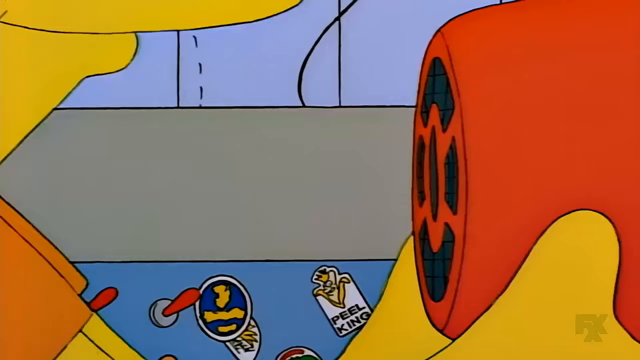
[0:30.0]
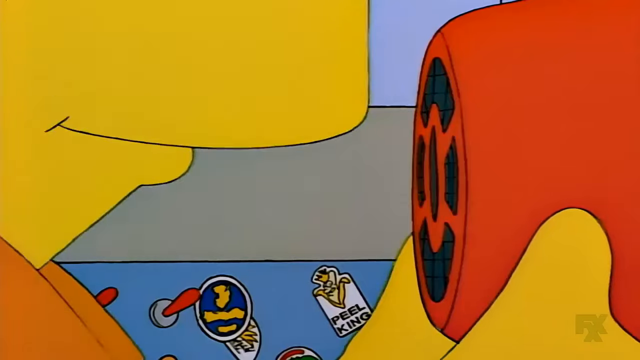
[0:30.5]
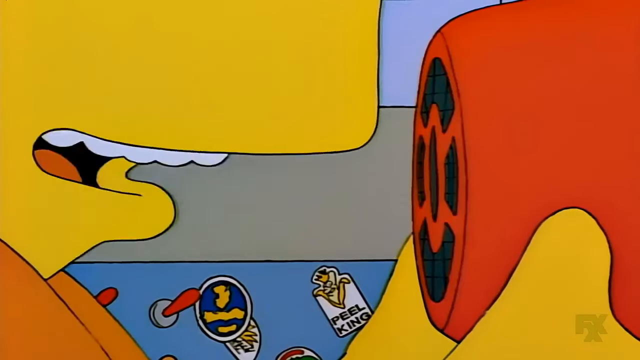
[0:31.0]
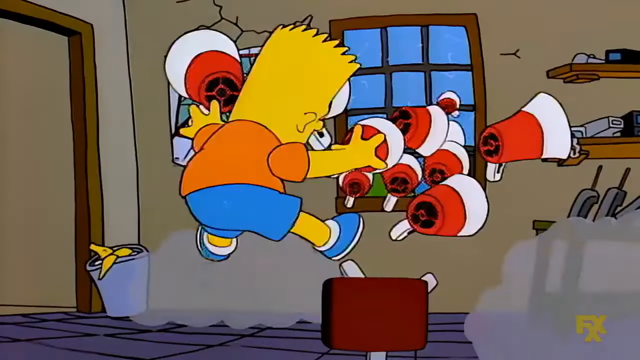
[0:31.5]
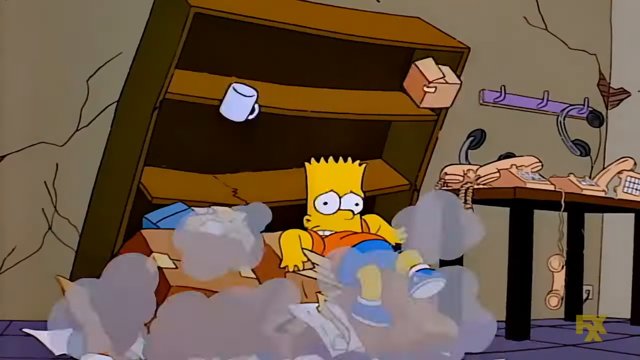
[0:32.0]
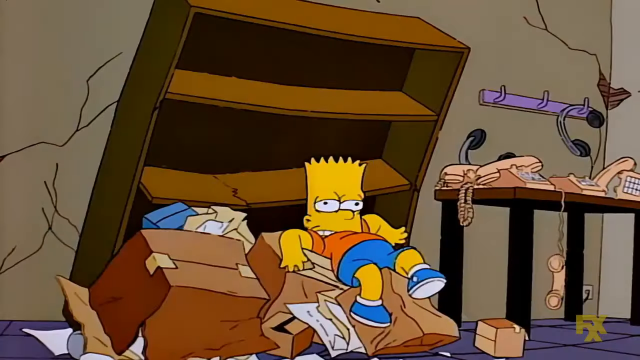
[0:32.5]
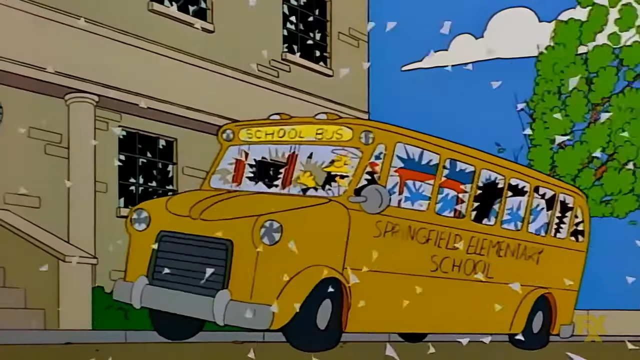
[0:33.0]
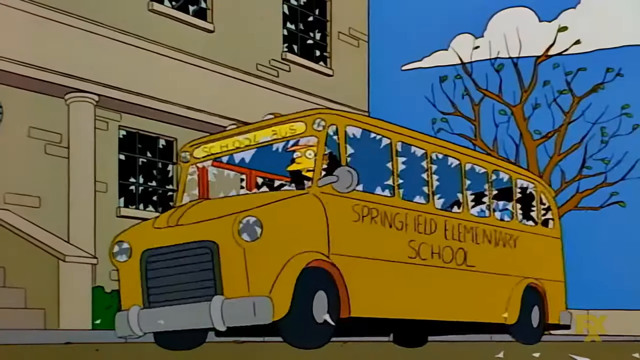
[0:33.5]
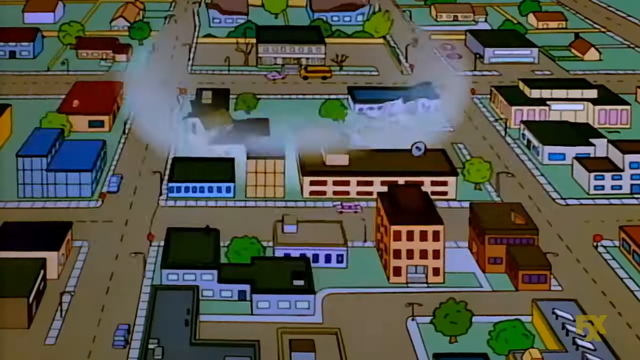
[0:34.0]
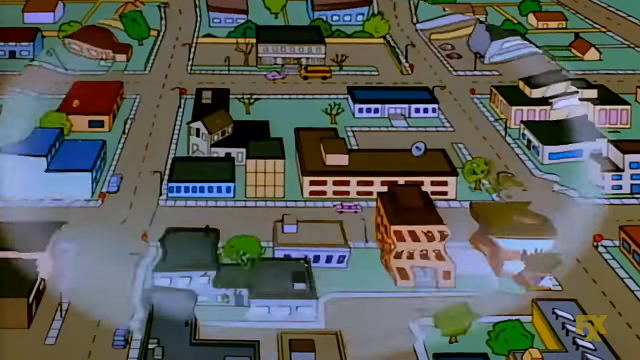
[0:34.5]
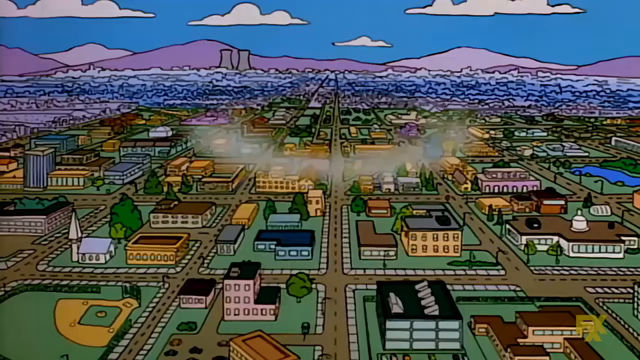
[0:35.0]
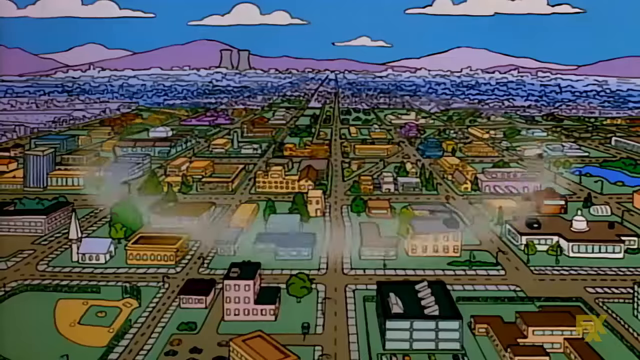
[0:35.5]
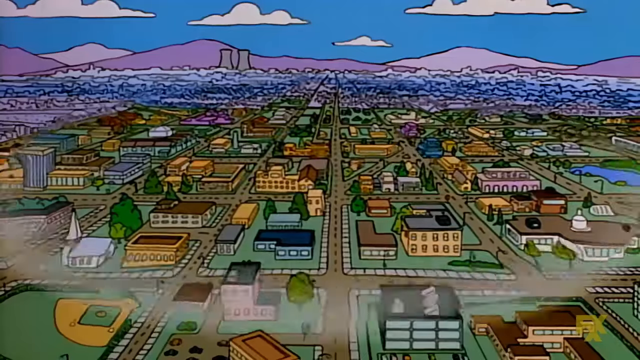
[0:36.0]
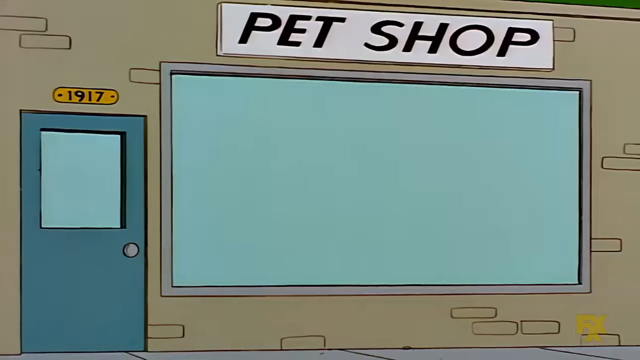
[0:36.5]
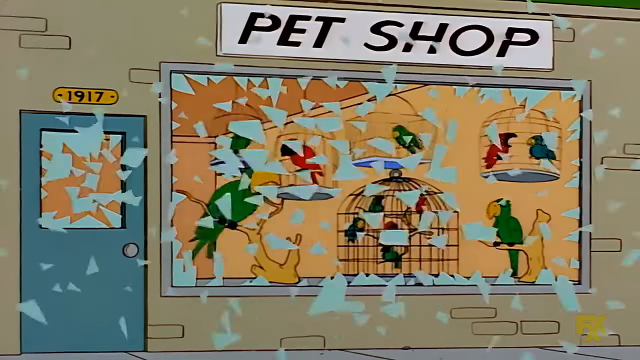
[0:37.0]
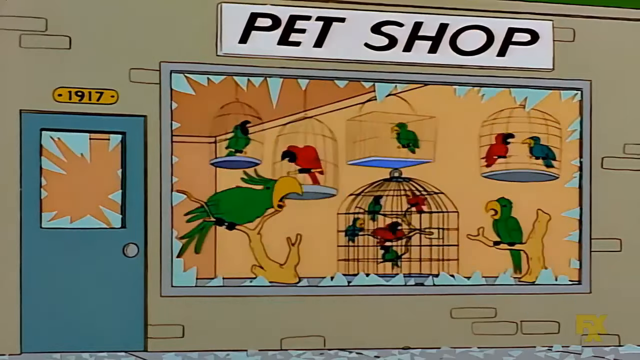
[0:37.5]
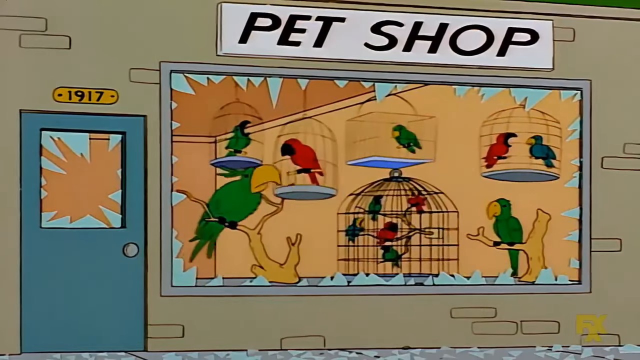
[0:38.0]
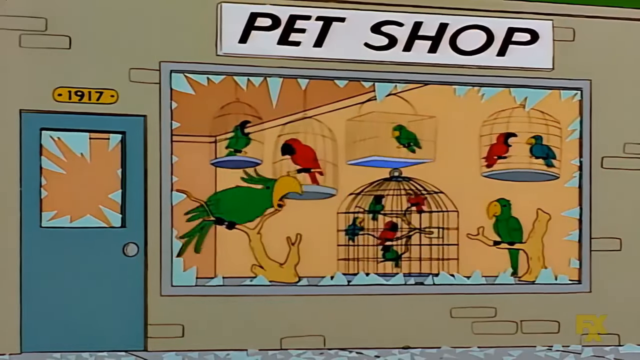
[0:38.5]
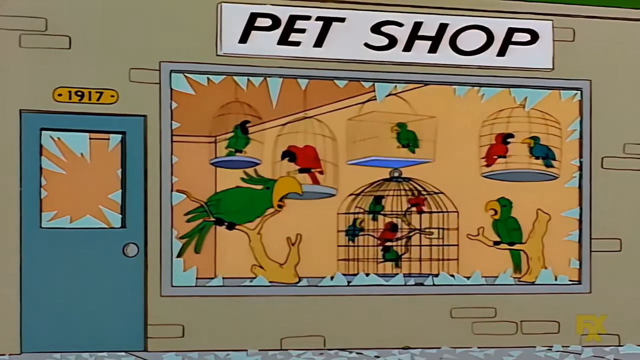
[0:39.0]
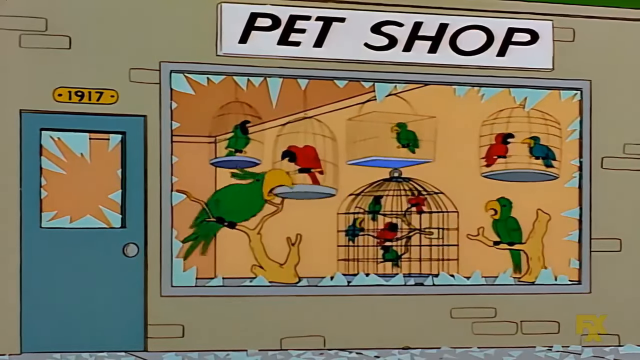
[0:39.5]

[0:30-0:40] In this Simpsons scene, Bart has a contraption of about 15 megaphones taped together, all turned on, balanced on an office chair and out the window. He says something into the chain of megaphones and it shoots him backwards. He hits the shelf; the wall kind of starts to crack, the shelf is broken, and things have fallen off it, leaving stuff everywhere: phones, boxes and more. He is completely knocked back. The view pans to a school bus with its windows totally shattered. A sound wave of sorts emanates from the school and covers the whole town of Springfield. Windows break and pets freak out. In what looks like a bird shop, parrots are tweeting and freaking out as the window has just broken from the sound spreading over the entire town.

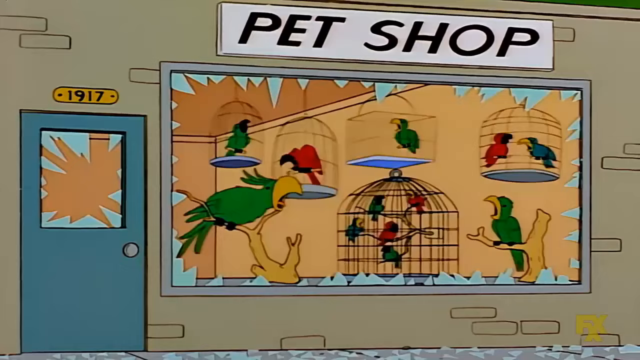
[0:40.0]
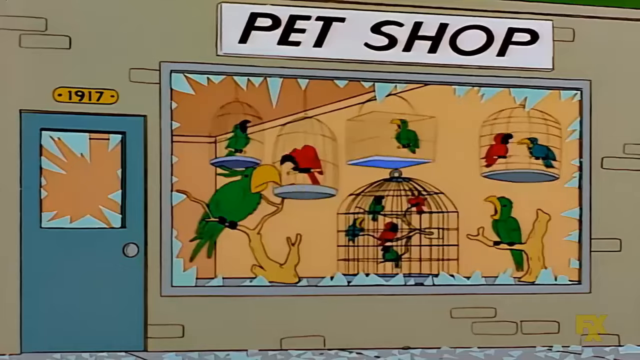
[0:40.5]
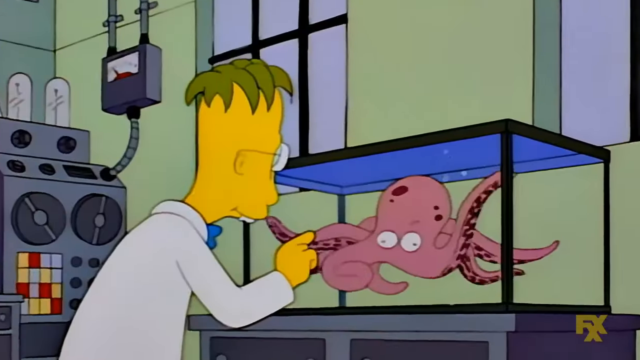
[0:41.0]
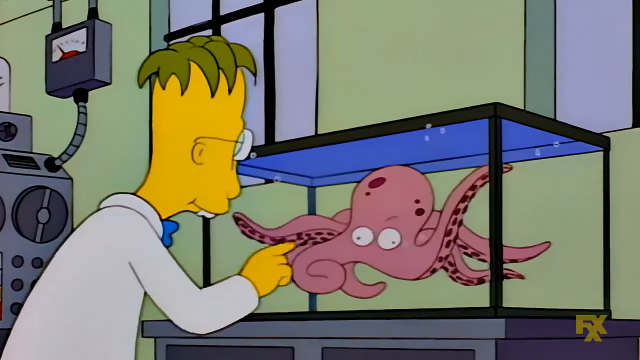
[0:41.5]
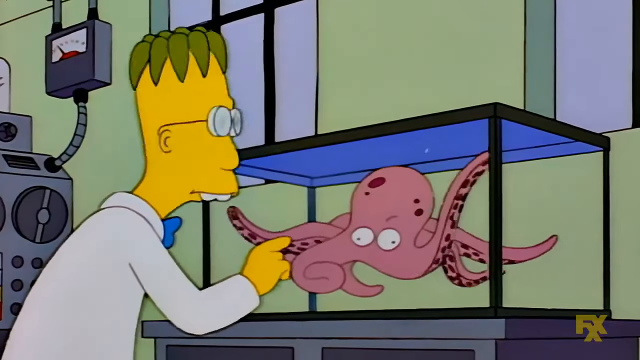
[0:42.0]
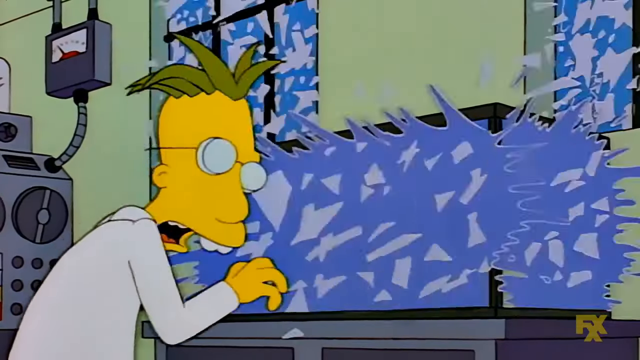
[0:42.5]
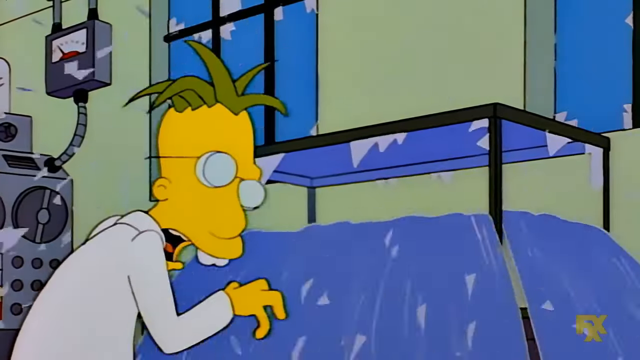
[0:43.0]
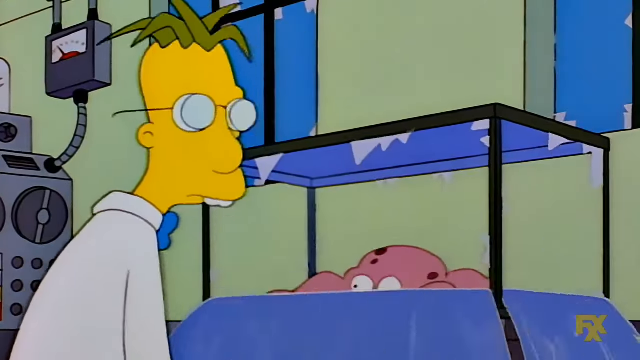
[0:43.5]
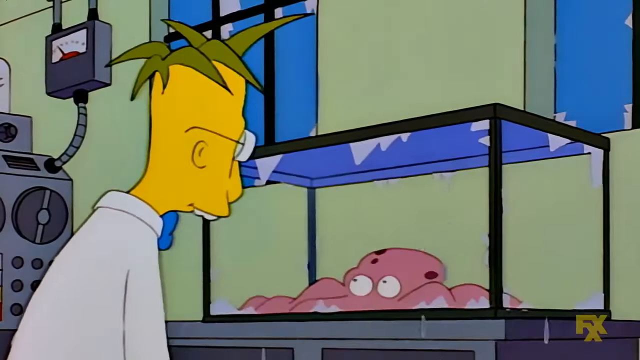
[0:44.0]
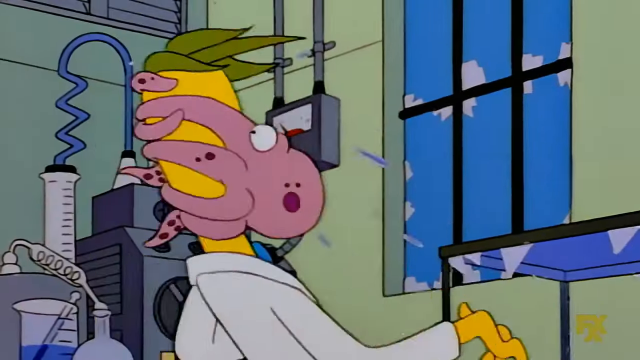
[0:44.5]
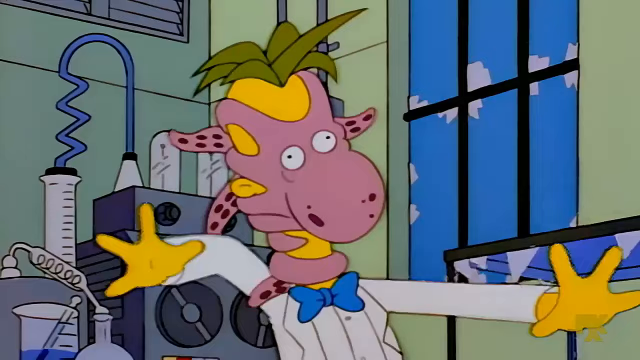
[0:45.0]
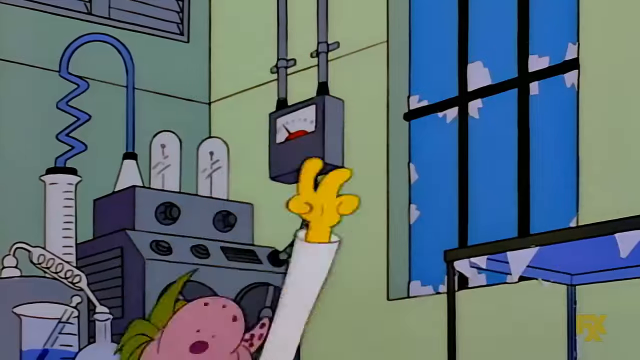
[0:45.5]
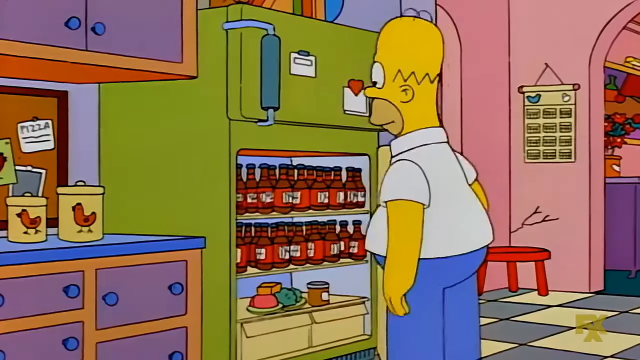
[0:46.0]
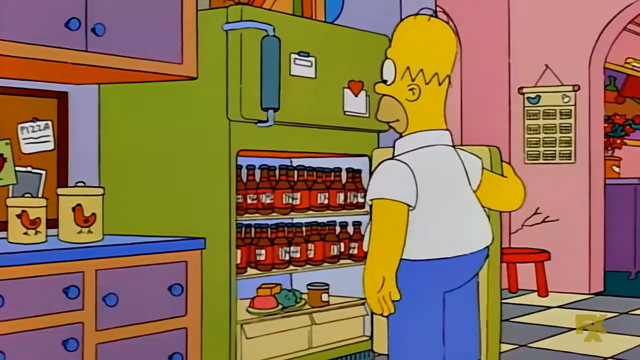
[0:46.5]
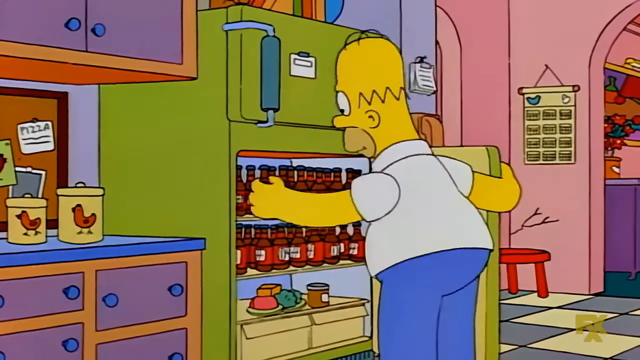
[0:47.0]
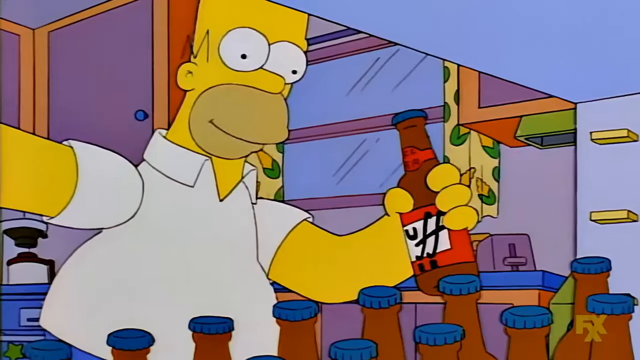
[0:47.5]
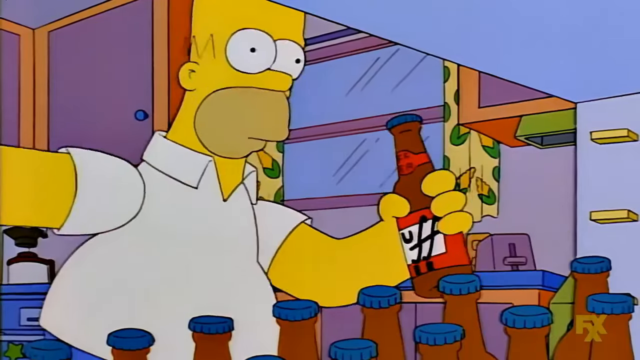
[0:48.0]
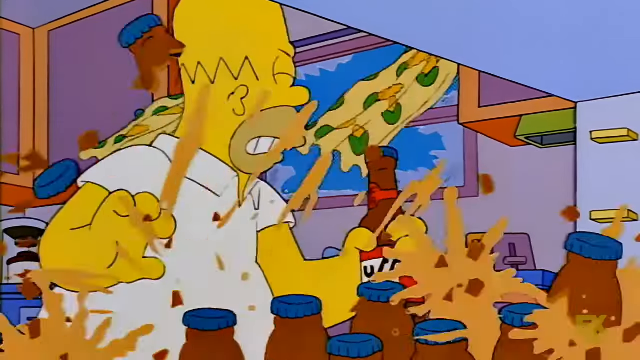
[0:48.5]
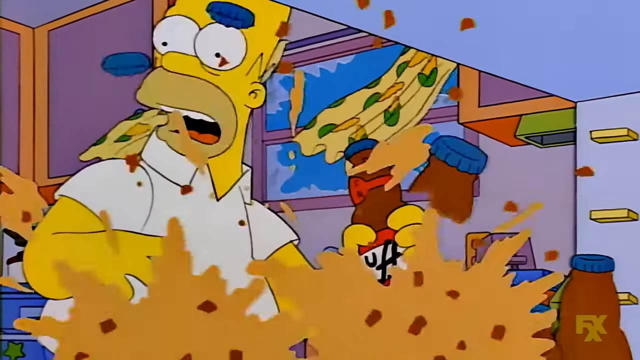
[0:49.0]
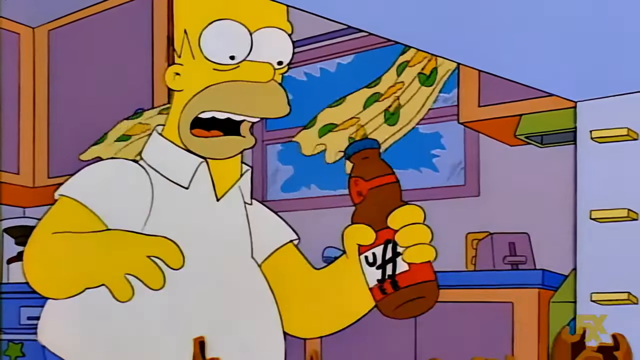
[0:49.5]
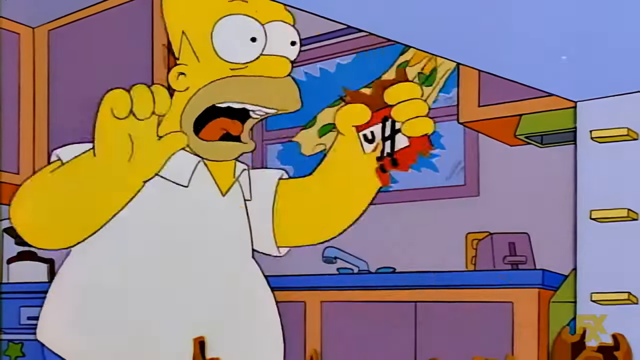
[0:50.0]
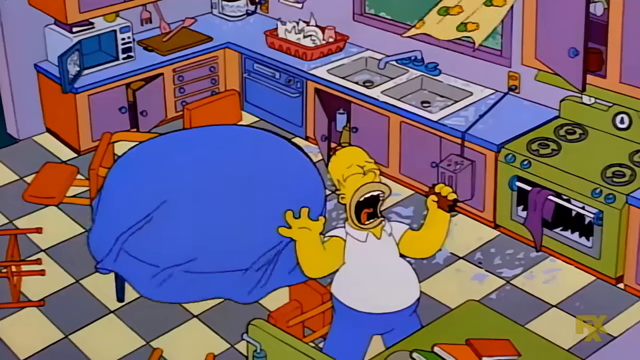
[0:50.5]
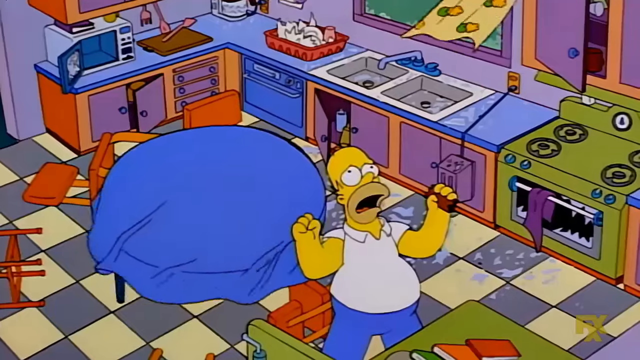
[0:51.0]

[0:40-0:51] In the cartoon, the Simpsons pet shop window has just broken. A bunch of parrots are tweeting and chirping: about four green ones, three red ones and three blue ones, all in different cages. Next, a professor or scientist taps on a glass holding an octopus, and it shatters; his hair is a mess, and the octopus jumps on his face and takes him down. Homer is at the fridge taking a Duff beer out of it, and then all the beers start popping from the sound wave.